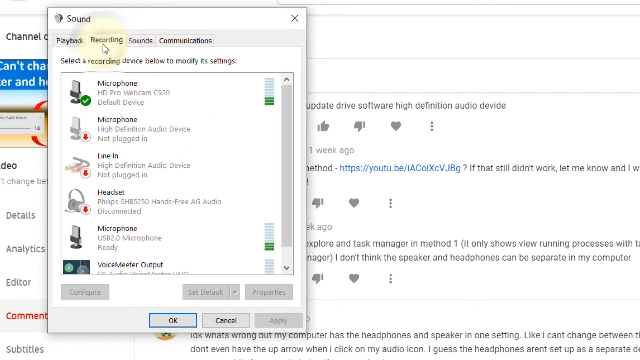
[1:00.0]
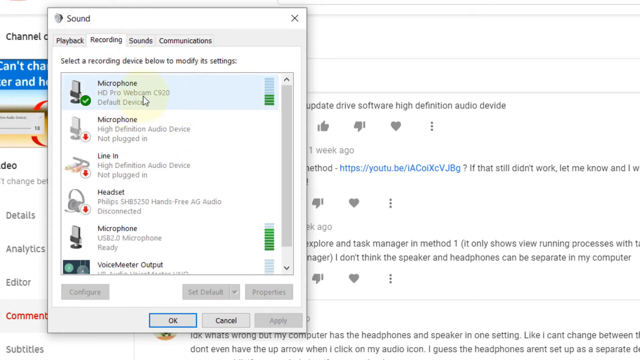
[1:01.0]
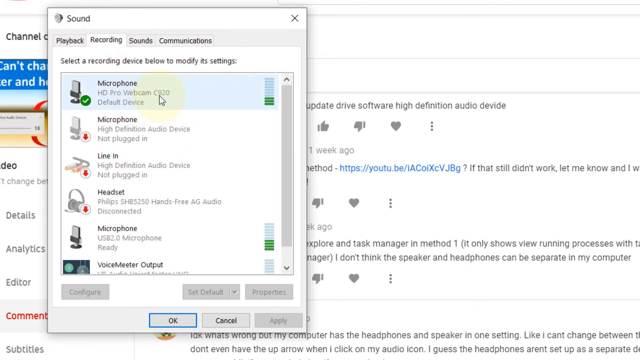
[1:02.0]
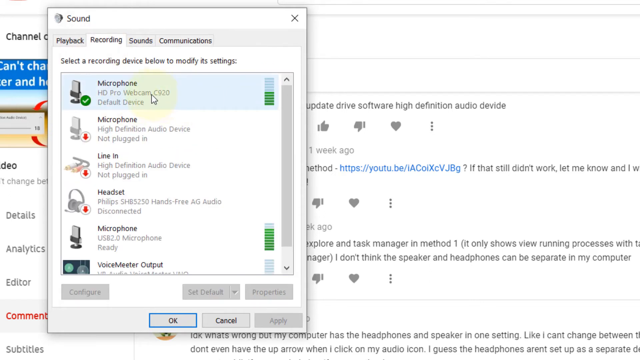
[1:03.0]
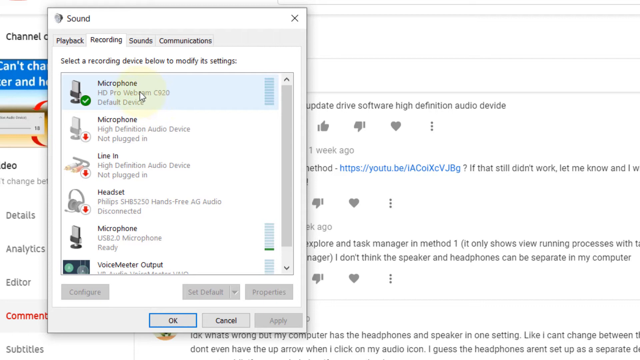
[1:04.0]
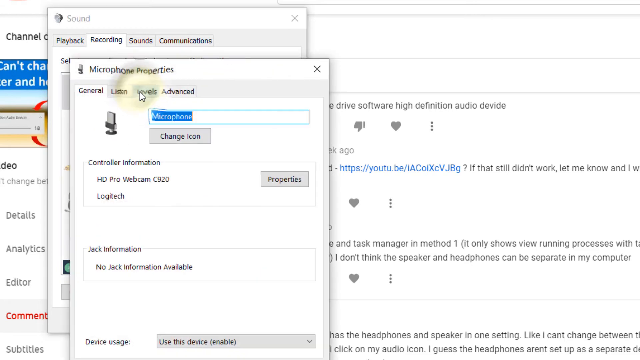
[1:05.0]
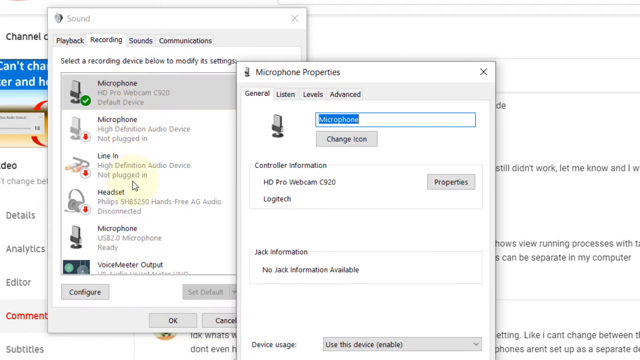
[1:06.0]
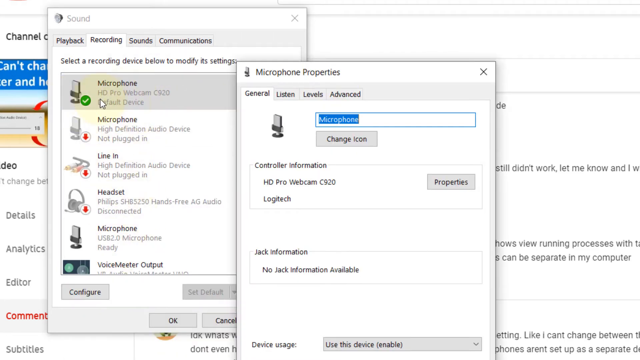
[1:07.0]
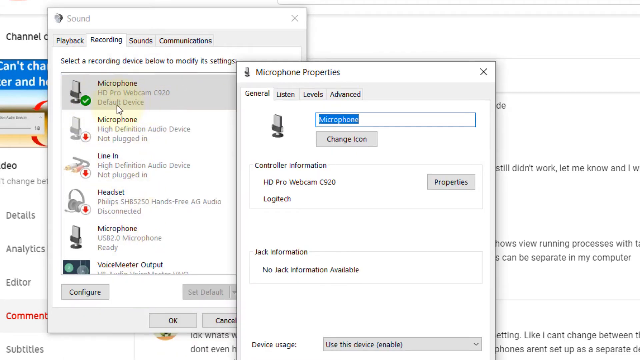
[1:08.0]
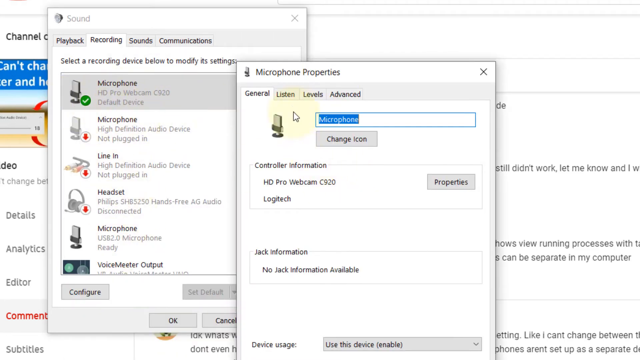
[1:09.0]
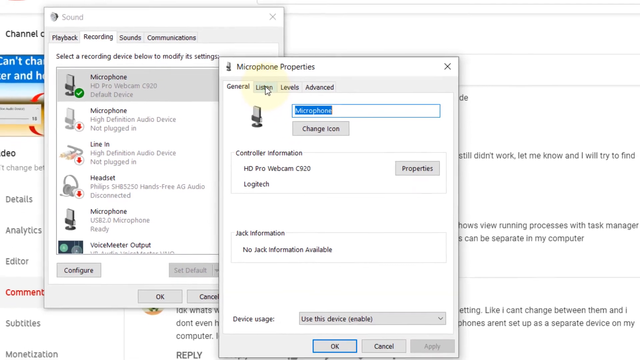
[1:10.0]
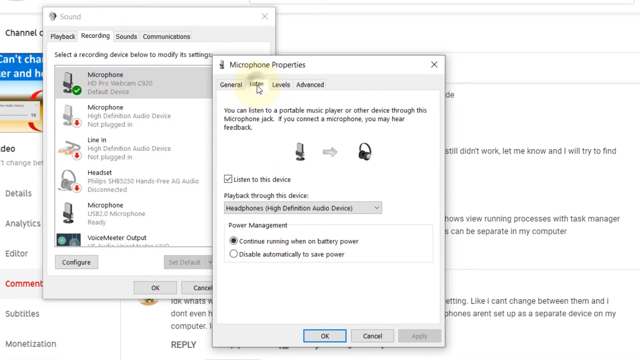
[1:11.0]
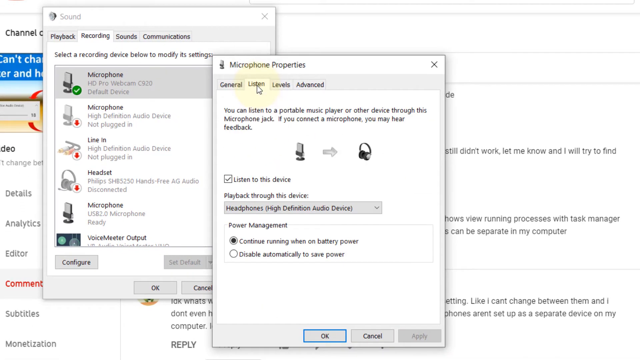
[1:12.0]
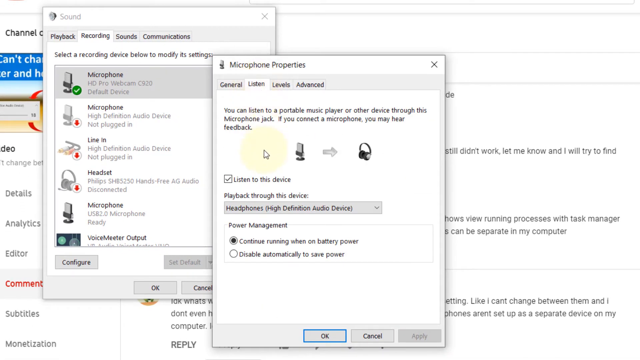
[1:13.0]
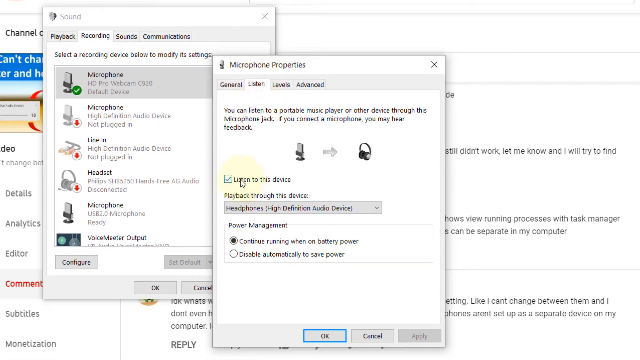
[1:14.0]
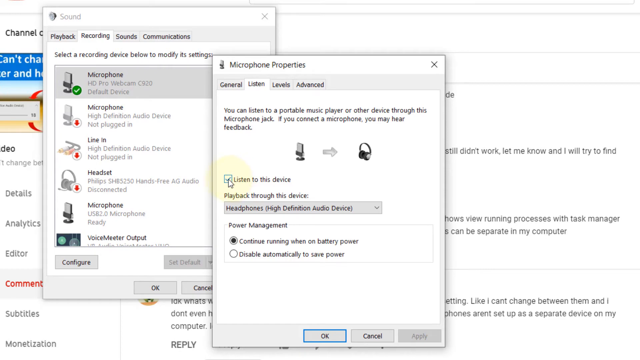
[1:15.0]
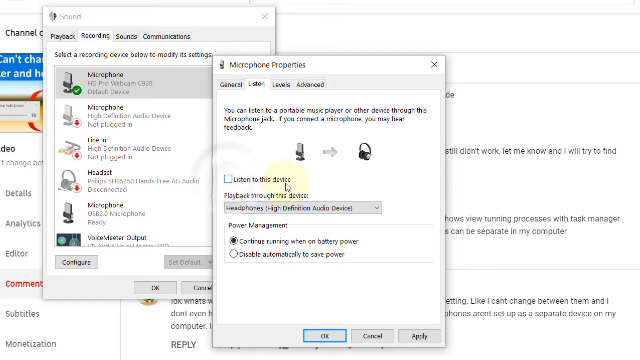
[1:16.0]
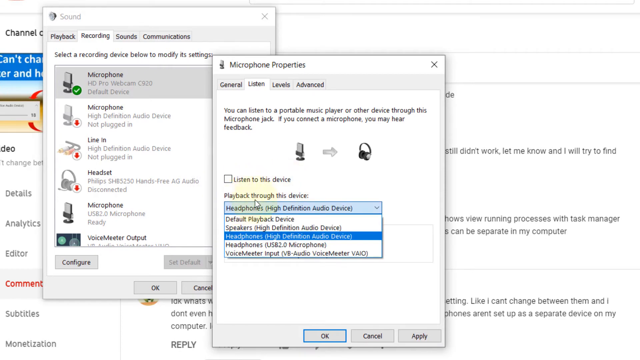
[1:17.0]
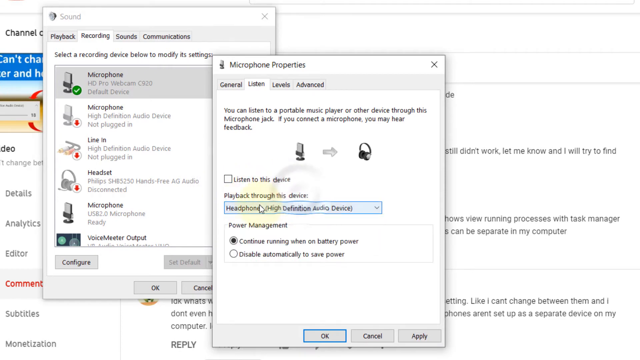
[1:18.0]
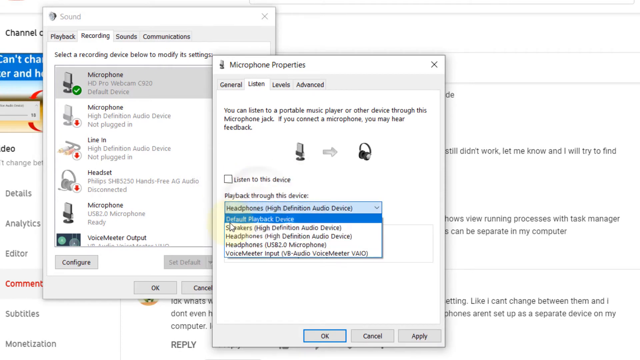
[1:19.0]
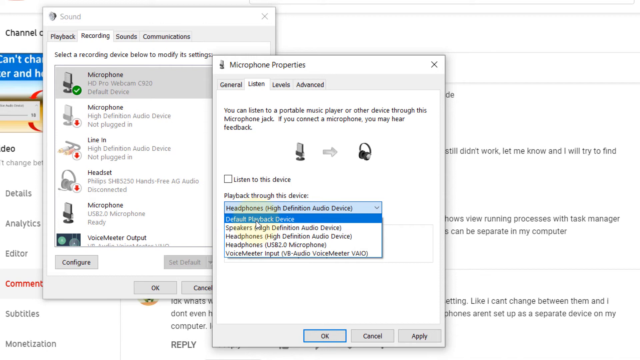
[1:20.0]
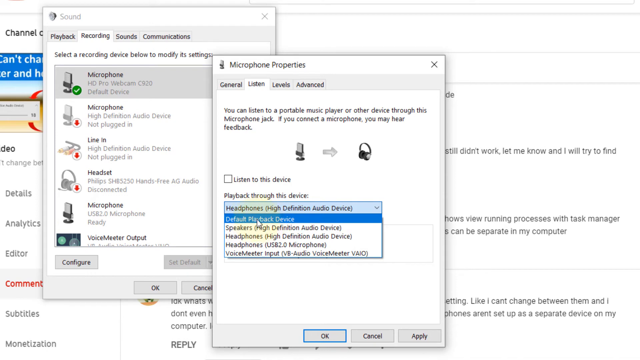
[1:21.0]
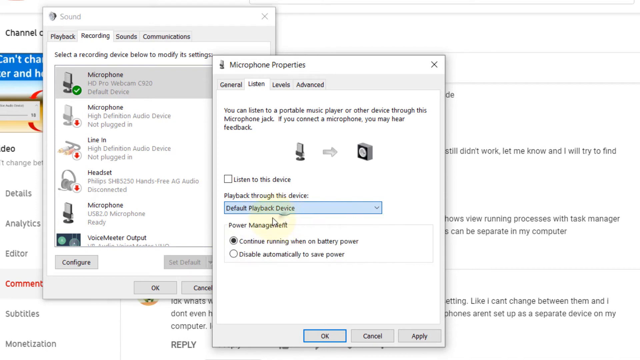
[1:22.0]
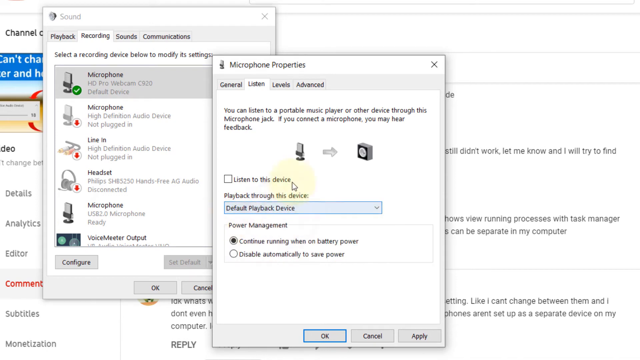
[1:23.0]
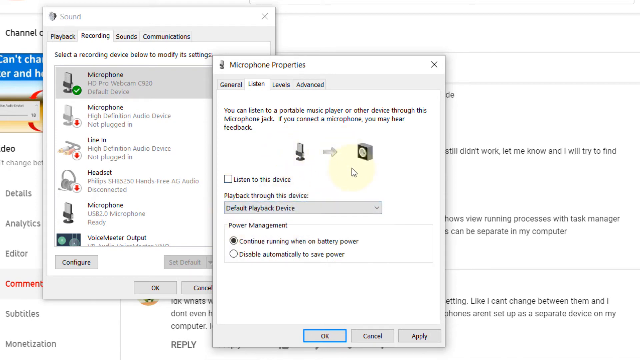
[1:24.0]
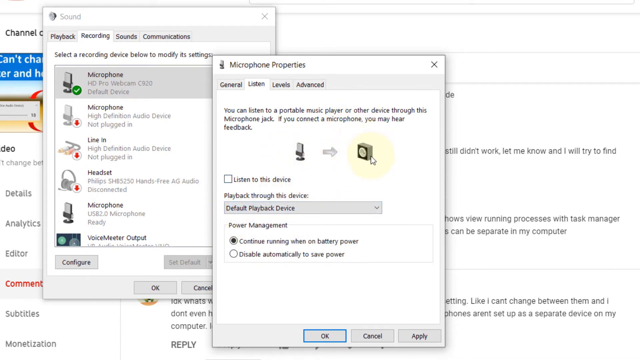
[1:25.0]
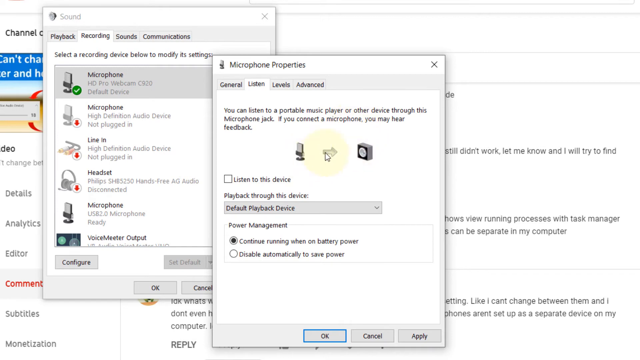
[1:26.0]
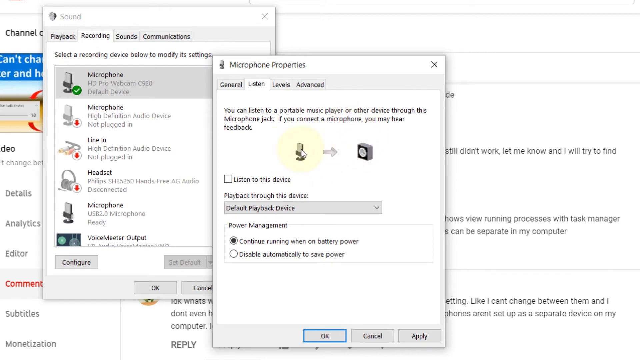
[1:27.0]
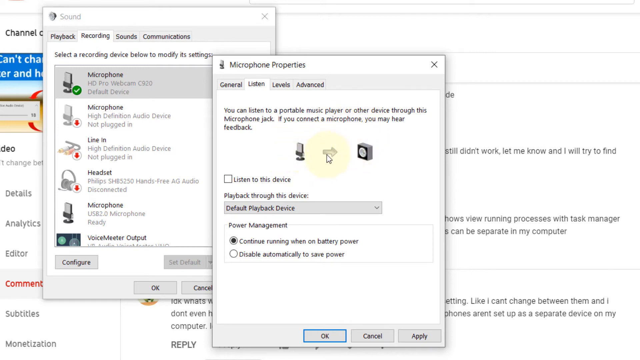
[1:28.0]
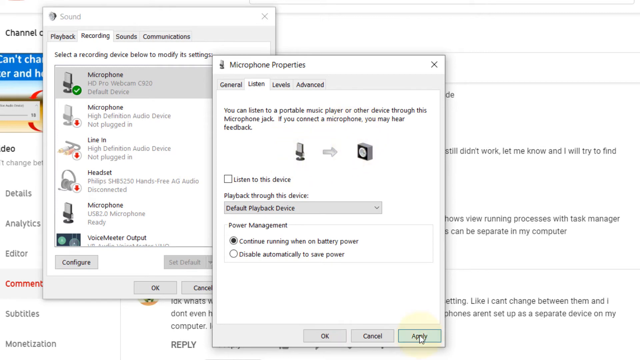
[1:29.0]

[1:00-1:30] In the background of the page is a conversation that seems to be a helpline, showing a thumbs up, a thumbs down and a heart, along with a link written in blue. An arrow clicks on an option called Sound, opening the Sound page with the tabs Playback, Recording, Sounds and Communication. The arrow clicks on Recording, where the available options include microphone, headsets and voice meter outputs. At the right-hand edge of the microphone and voice meter outputs entries, there seems to be a green bar that keeps going up and down. The arrow clicks on microphone, and there seems to be a green tick on it. Microphone Properties then opens, showing the microphone, a change icon and the microphone's properties. The arrow zooms out and presses on Listen, where "listen to device" is switched off. It then goes to headphones settings and presses on default playback devices, with power management right underneath. The arrow moves back and forth between these two and at the end presses OK.